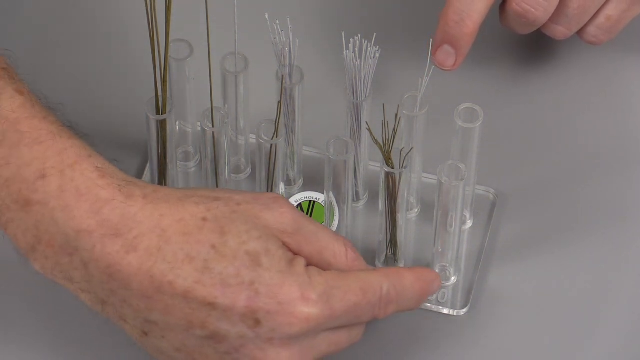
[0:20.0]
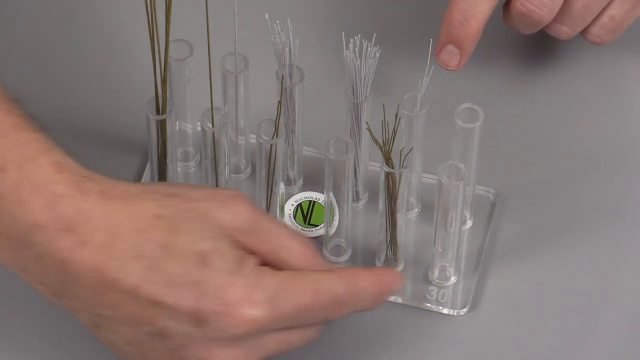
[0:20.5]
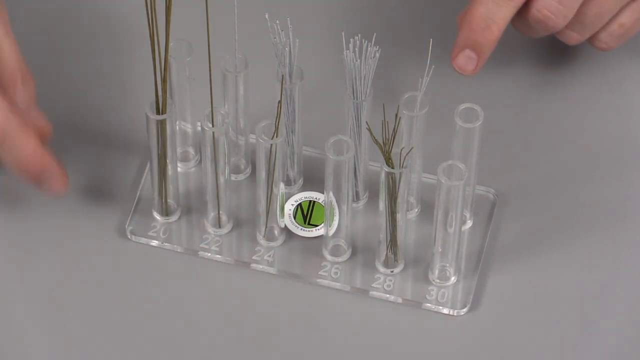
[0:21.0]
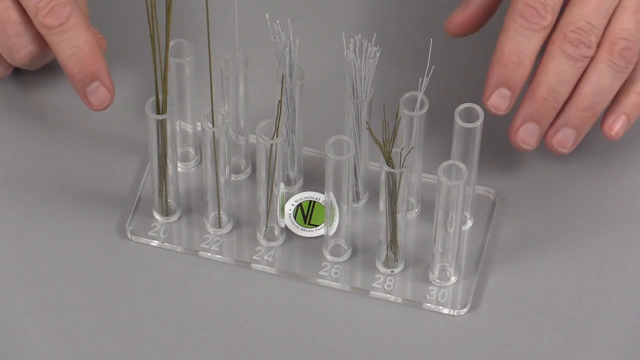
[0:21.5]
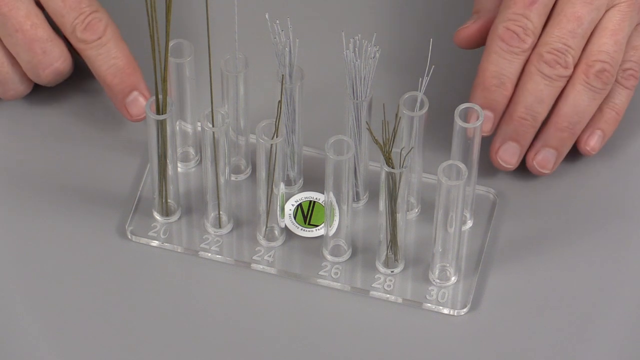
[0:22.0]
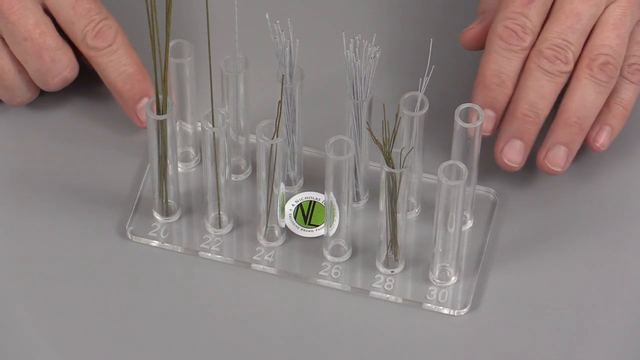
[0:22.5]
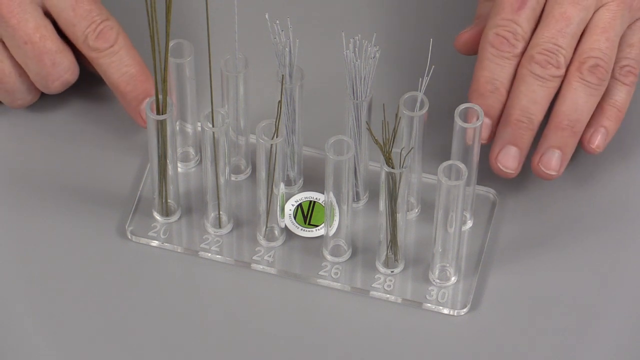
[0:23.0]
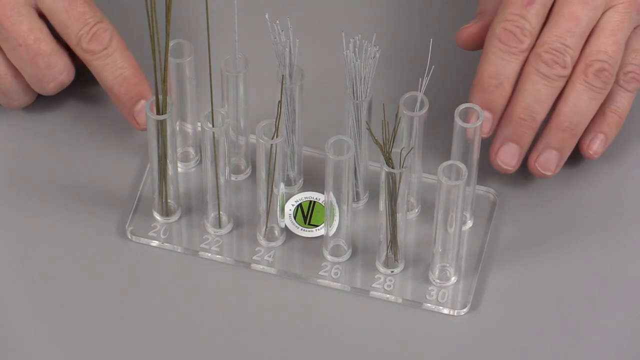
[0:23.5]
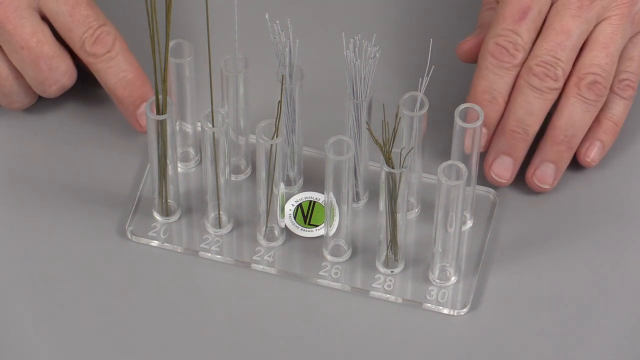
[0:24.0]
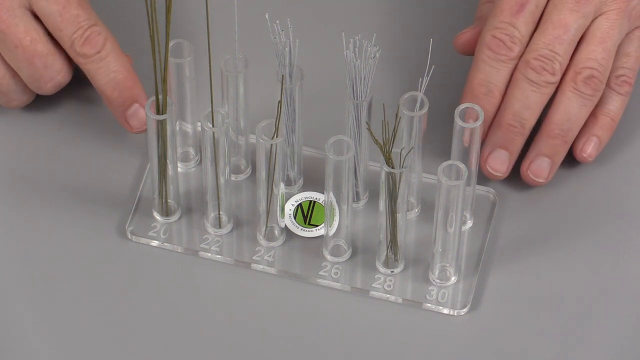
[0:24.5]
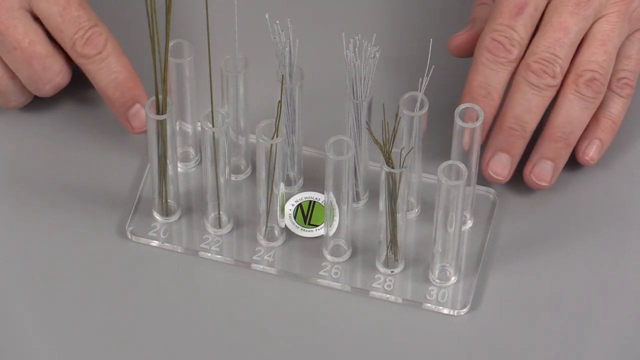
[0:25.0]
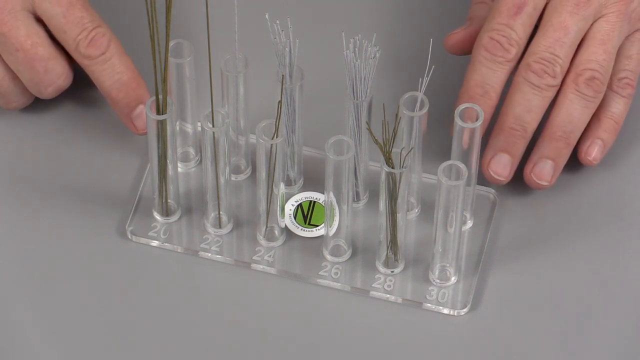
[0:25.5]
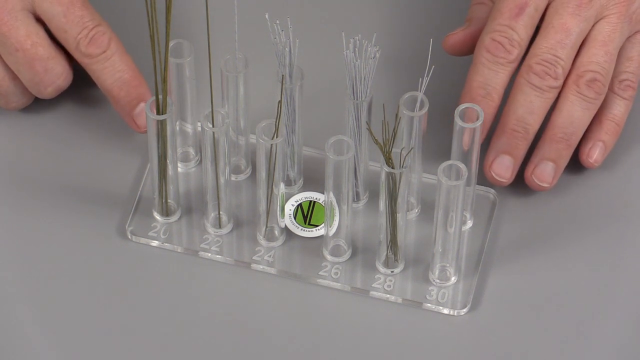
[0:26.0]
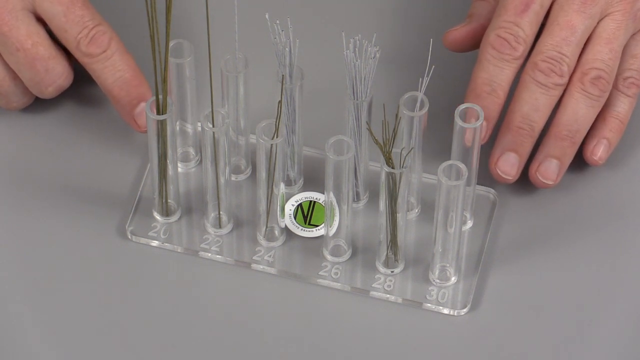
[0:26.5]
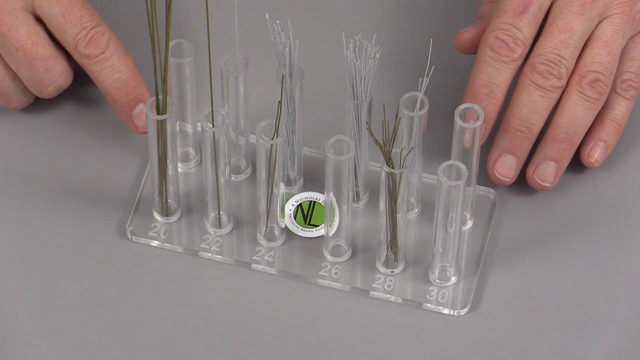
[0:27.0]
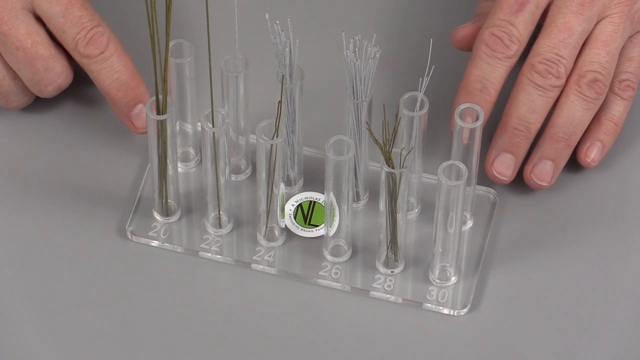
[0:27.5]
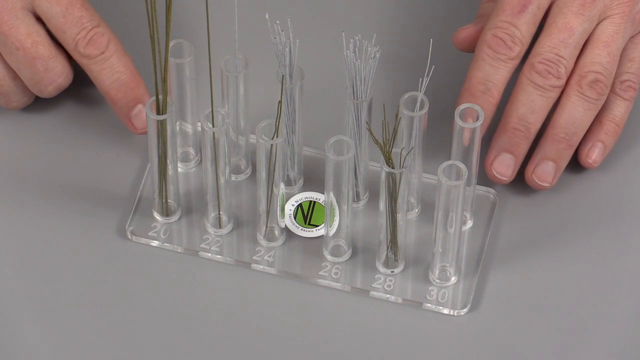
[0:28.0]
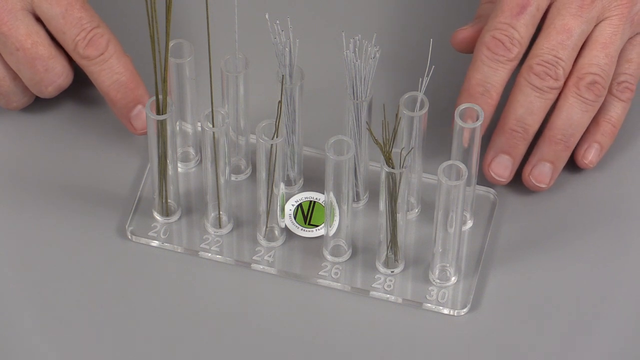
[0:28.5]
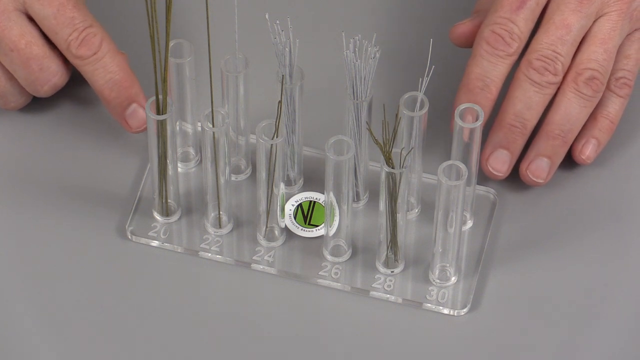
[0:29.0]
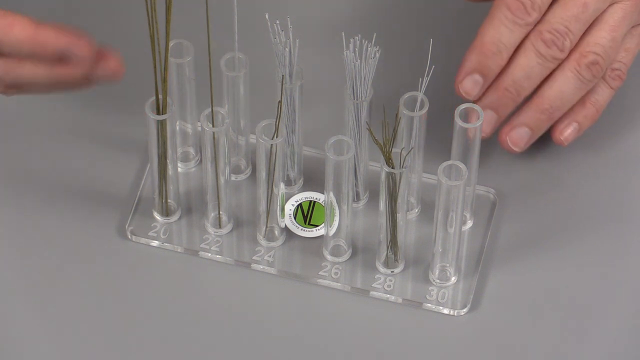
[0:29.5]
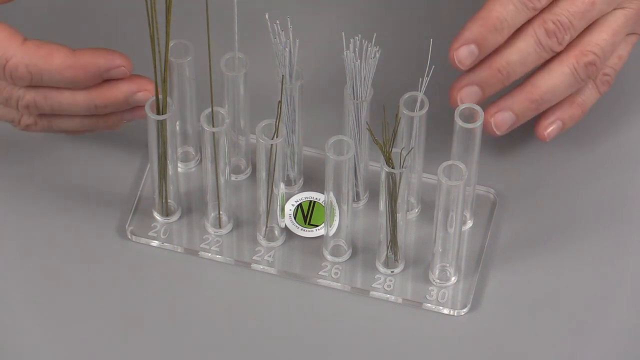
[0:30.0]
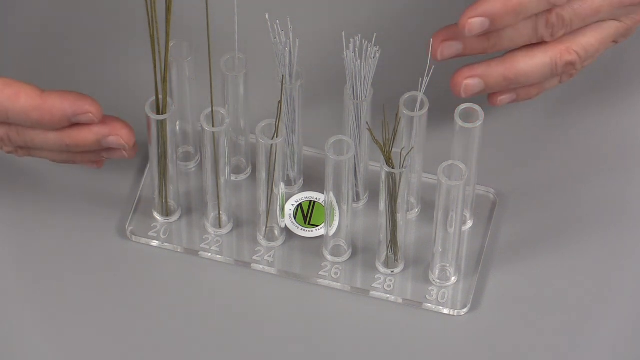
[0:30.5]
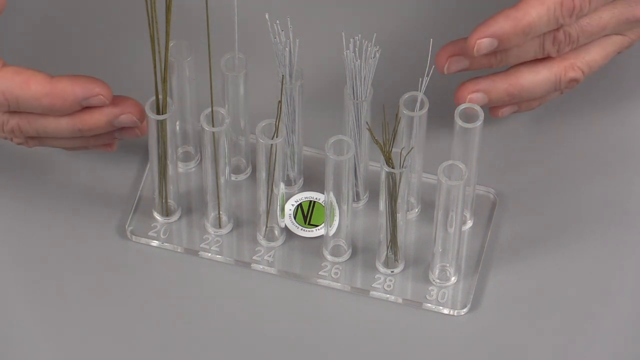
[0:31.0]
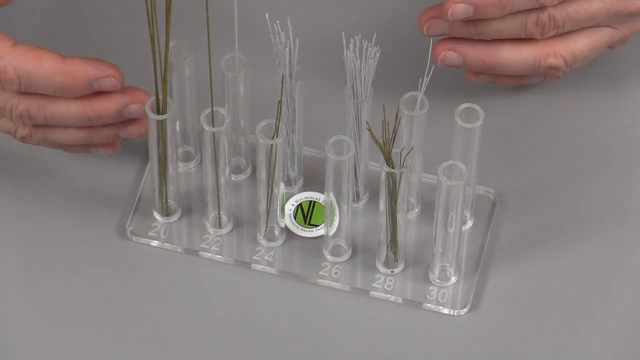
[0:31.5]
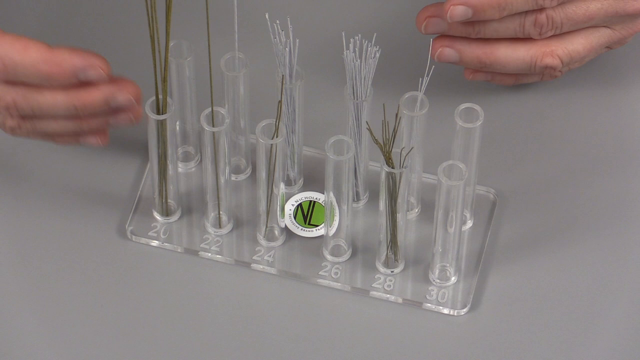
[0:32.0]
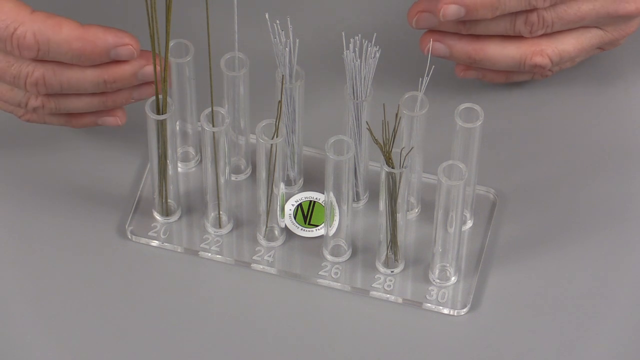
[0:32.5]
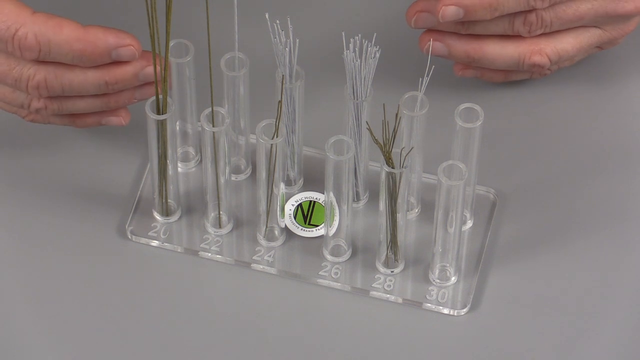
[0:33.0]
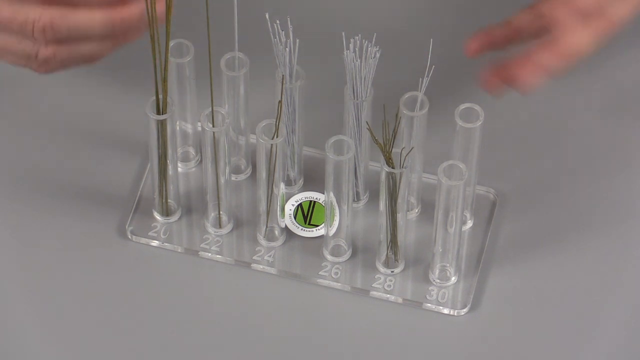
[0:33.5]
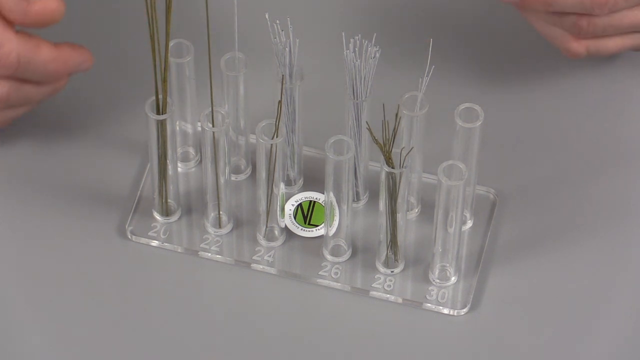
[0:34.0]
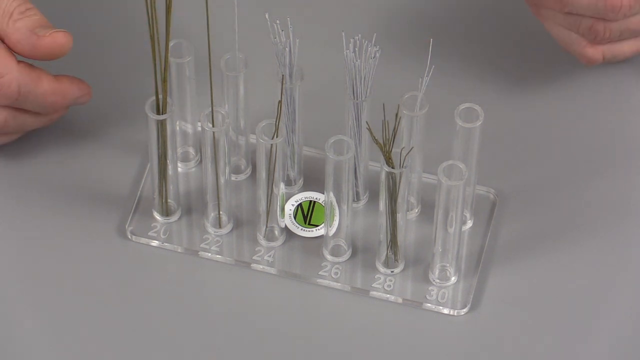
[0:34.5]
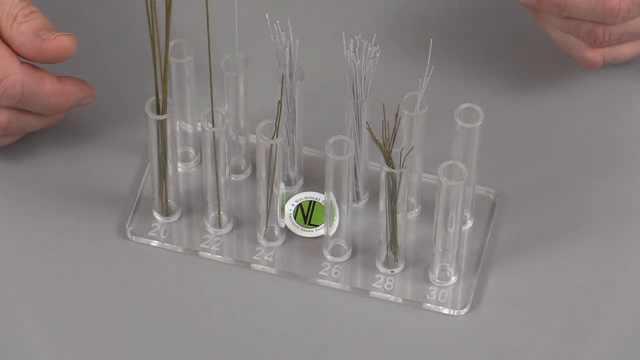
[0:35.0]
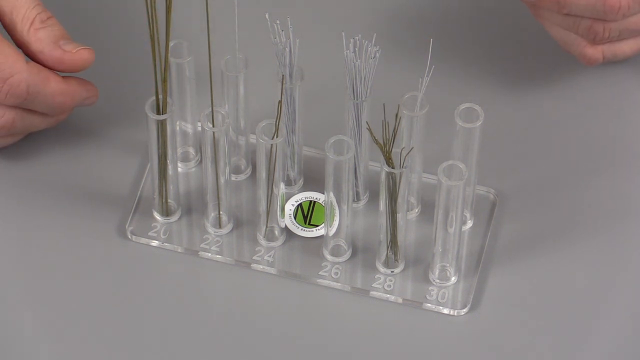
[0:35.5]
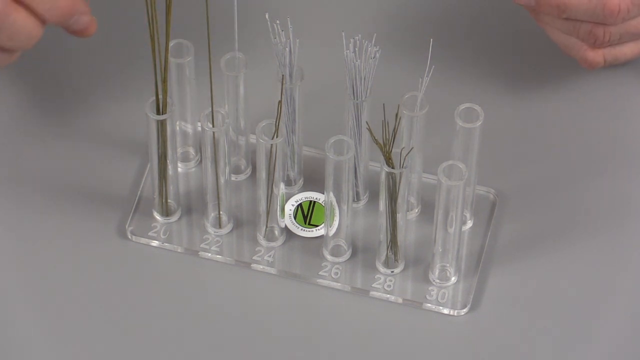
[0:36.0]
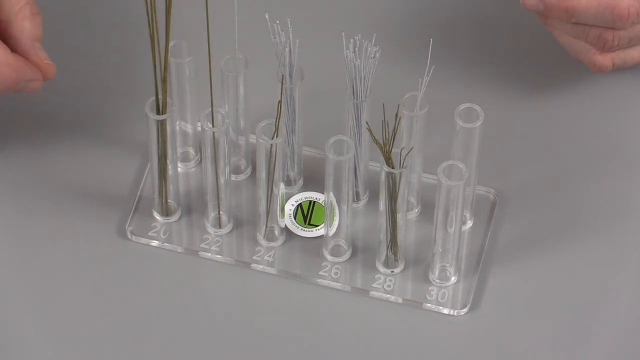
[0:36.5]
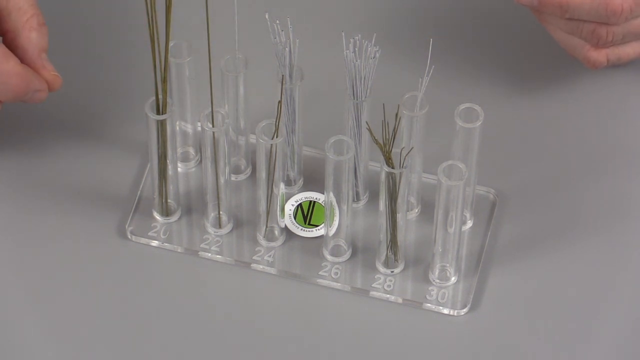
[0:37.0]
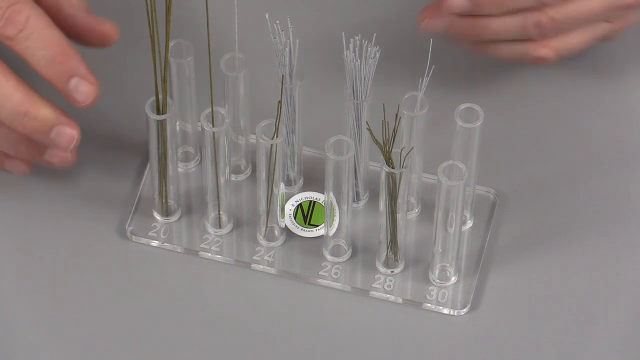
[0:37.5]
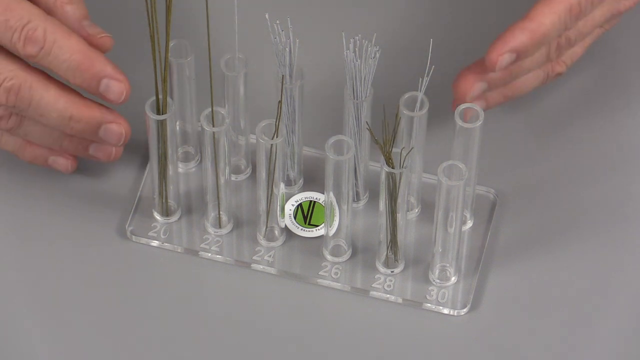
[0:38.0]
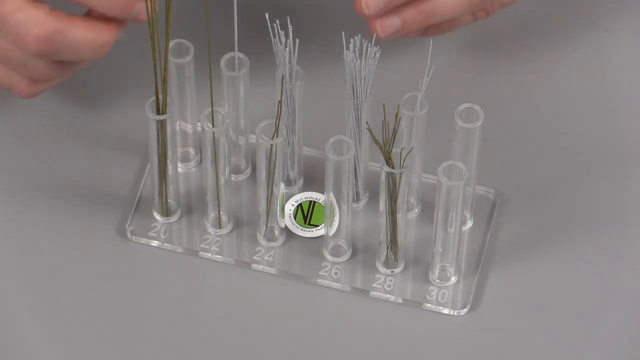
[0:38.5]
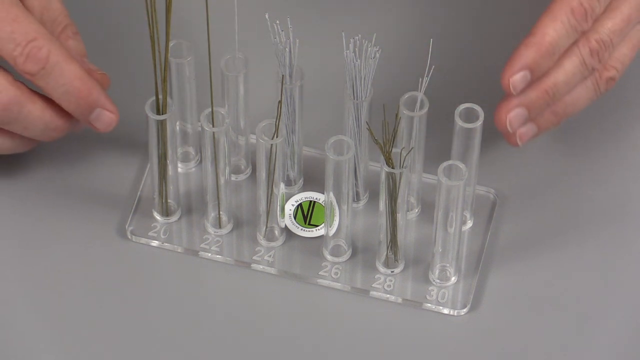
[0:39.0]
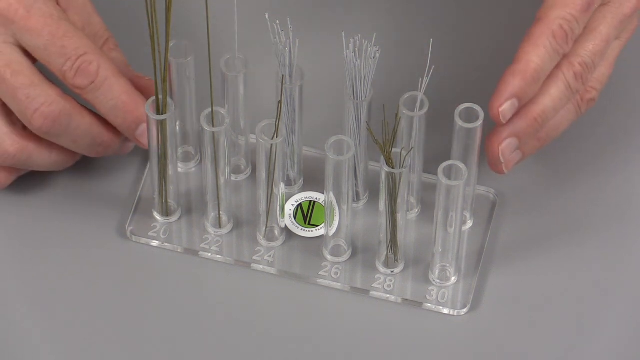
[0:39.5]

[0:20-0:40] The batch of 12 vials is shown with the left and right hands of a male person, each with five fingers. The hands seem to be demonstrating, pulling and showing how the vials work, pointing around them, to the back and to the side of the vials. The fingers look very clean, with nails cut very short, and the cuticles and knuckles also look clean.